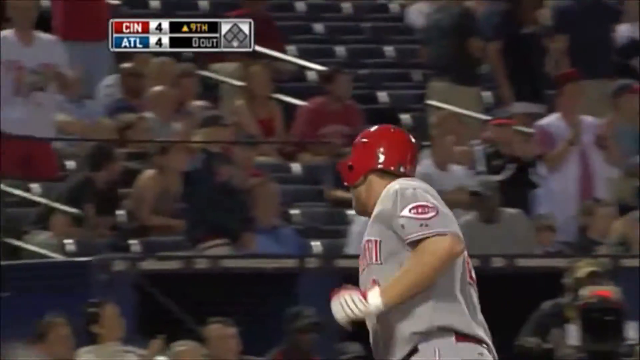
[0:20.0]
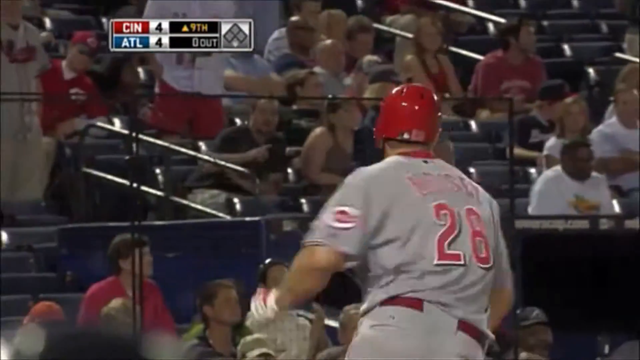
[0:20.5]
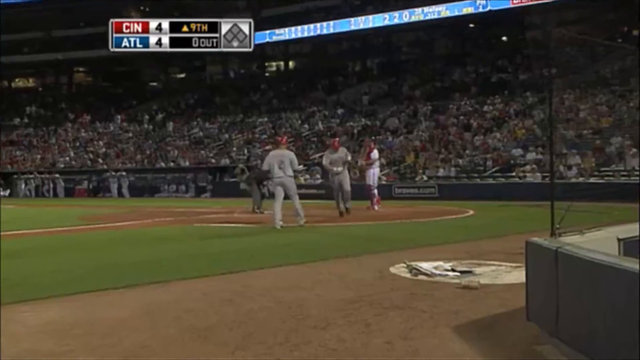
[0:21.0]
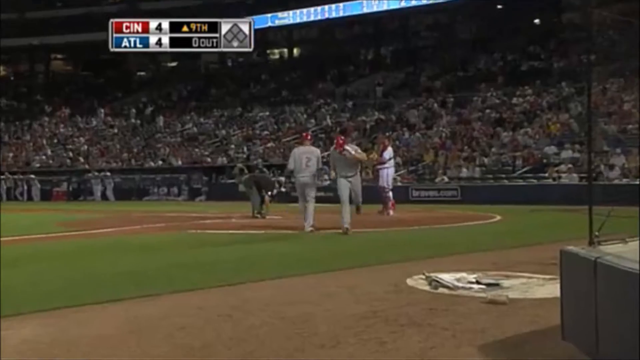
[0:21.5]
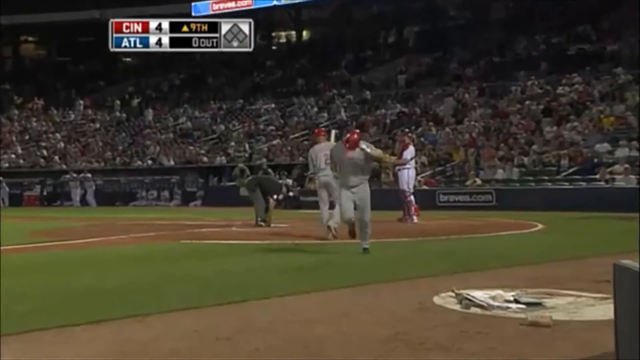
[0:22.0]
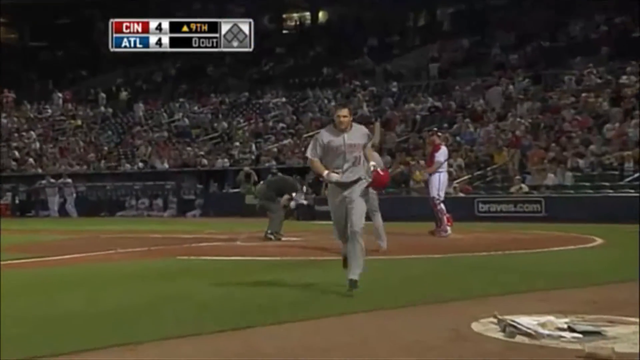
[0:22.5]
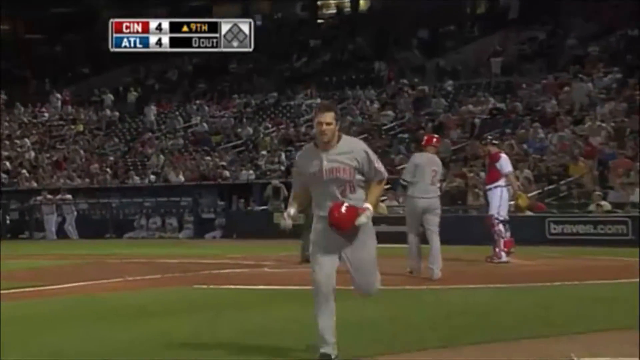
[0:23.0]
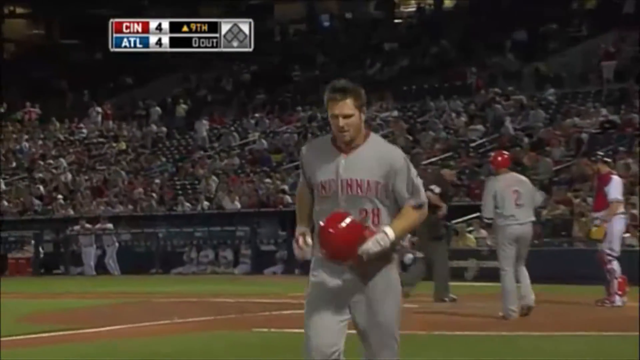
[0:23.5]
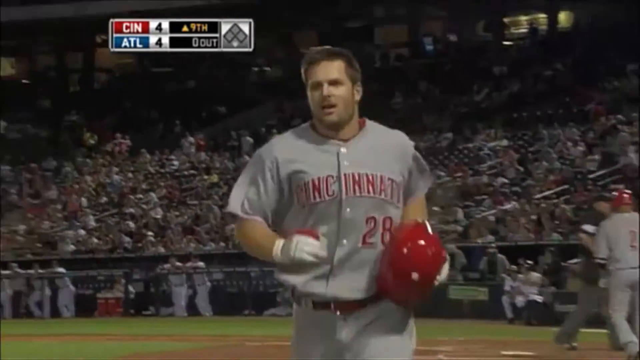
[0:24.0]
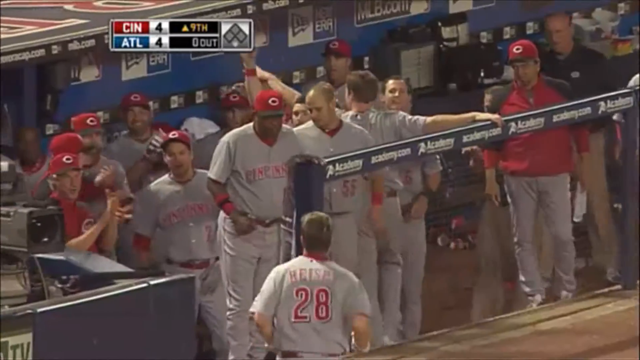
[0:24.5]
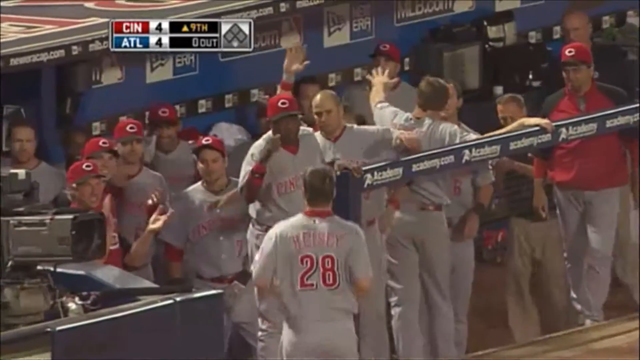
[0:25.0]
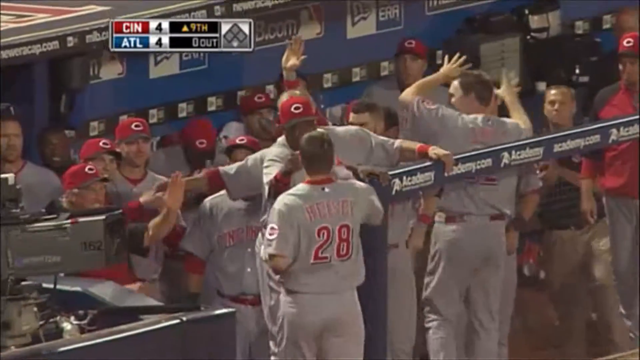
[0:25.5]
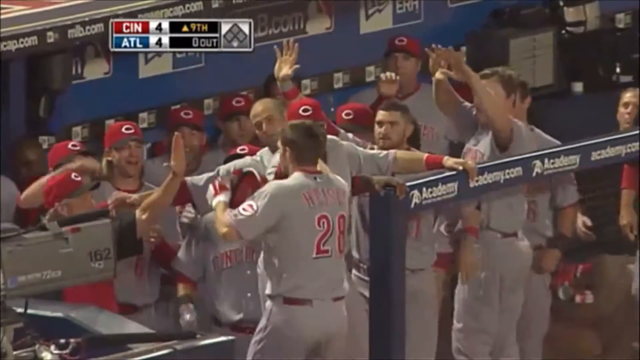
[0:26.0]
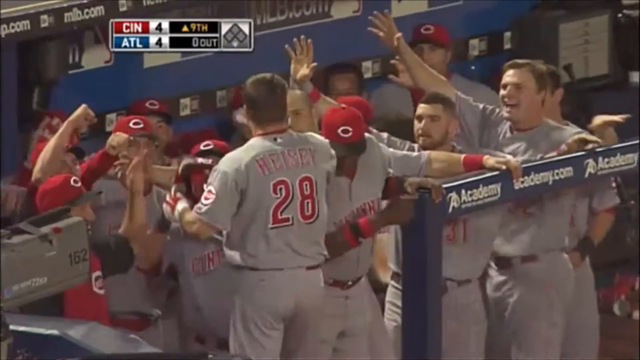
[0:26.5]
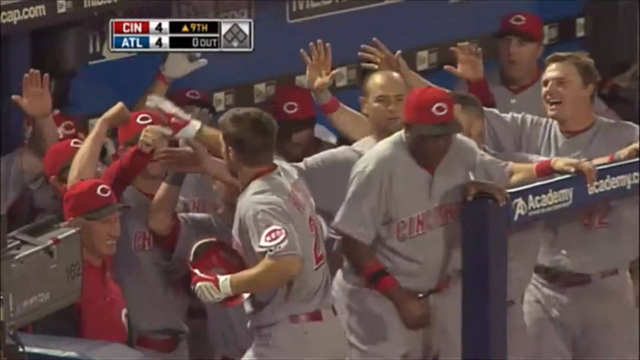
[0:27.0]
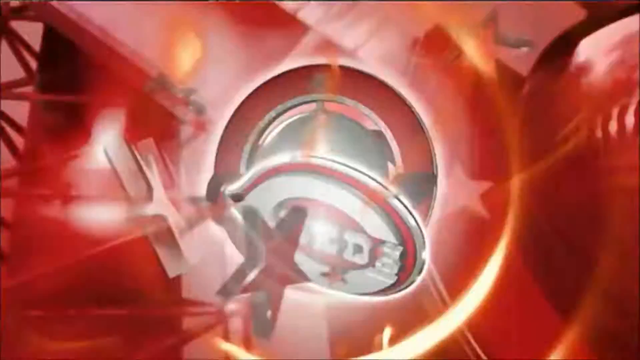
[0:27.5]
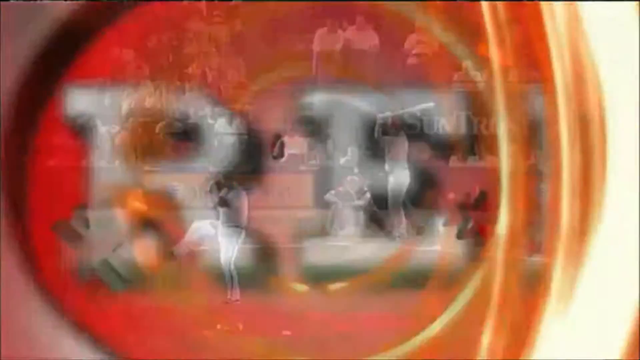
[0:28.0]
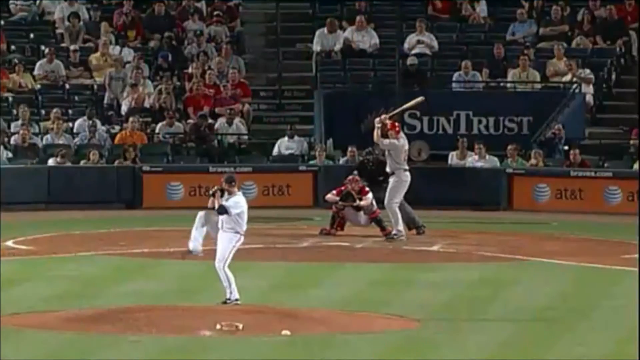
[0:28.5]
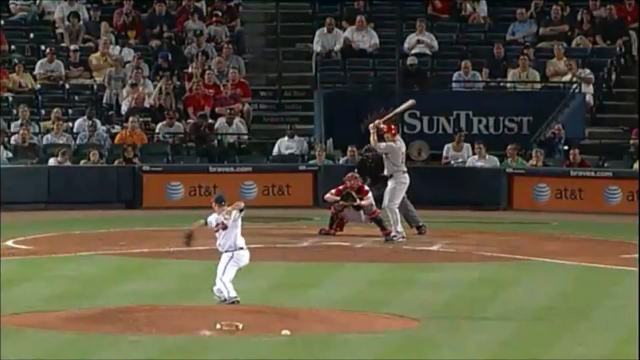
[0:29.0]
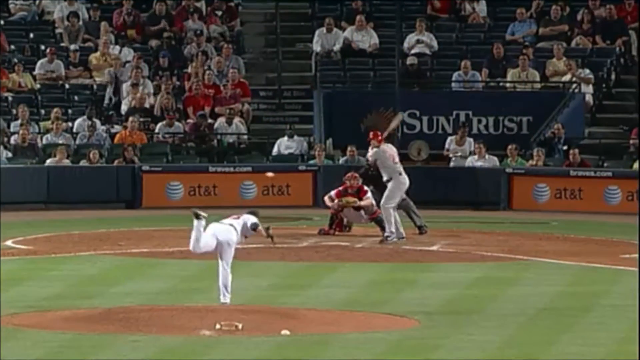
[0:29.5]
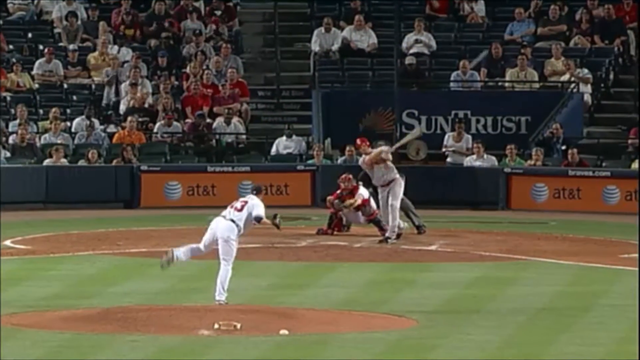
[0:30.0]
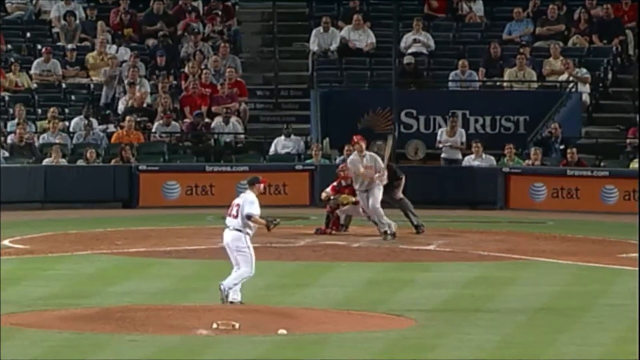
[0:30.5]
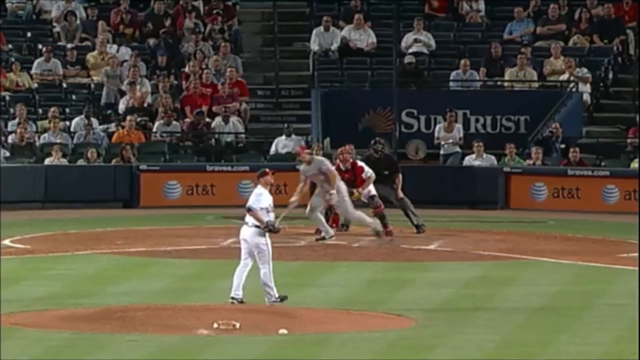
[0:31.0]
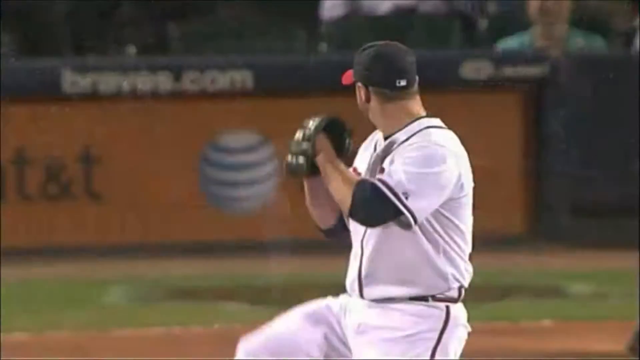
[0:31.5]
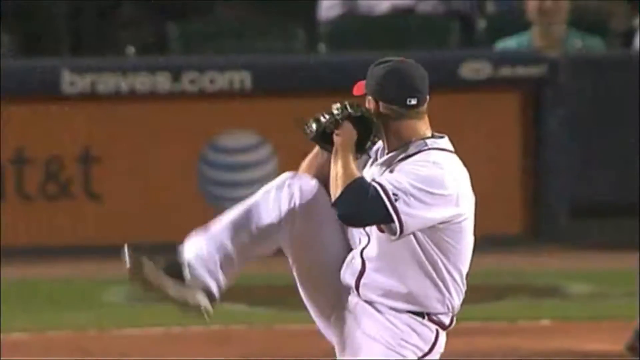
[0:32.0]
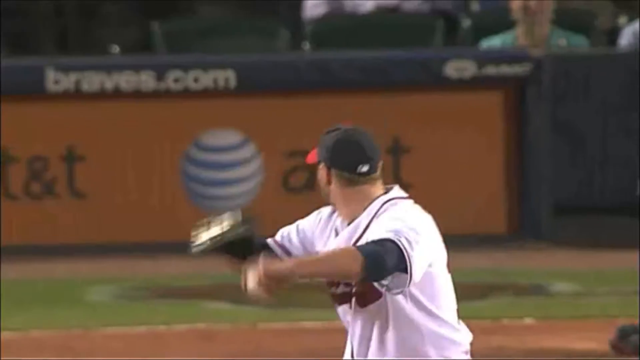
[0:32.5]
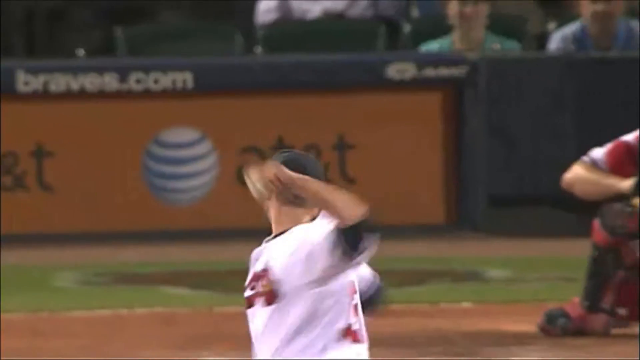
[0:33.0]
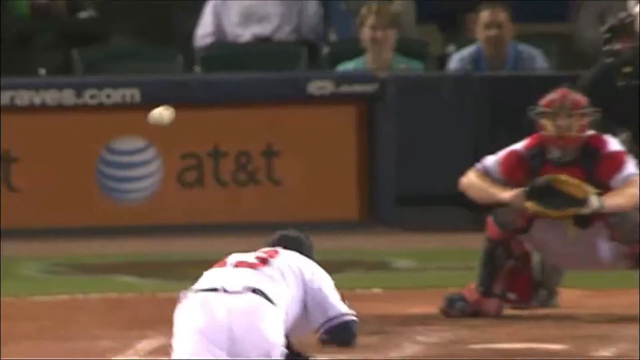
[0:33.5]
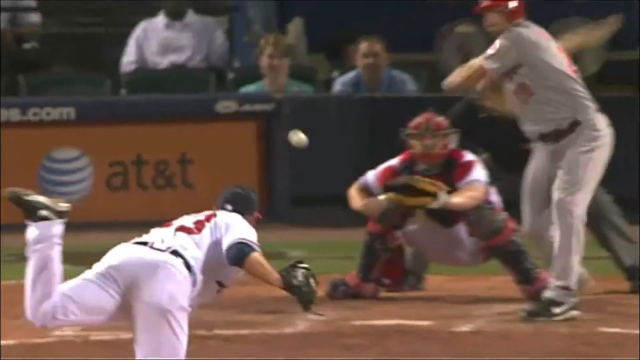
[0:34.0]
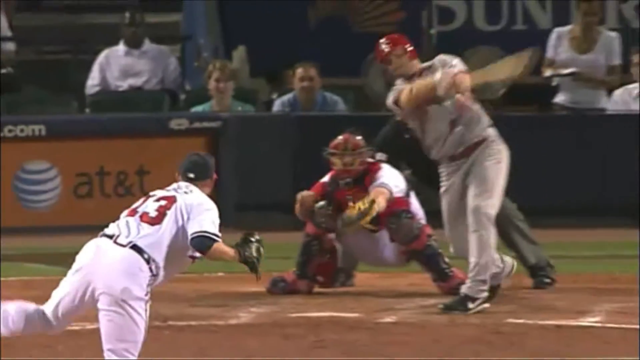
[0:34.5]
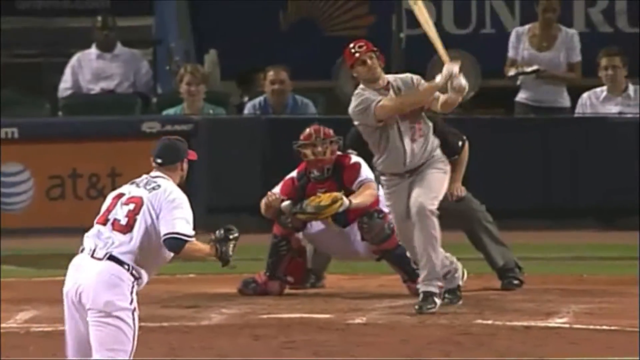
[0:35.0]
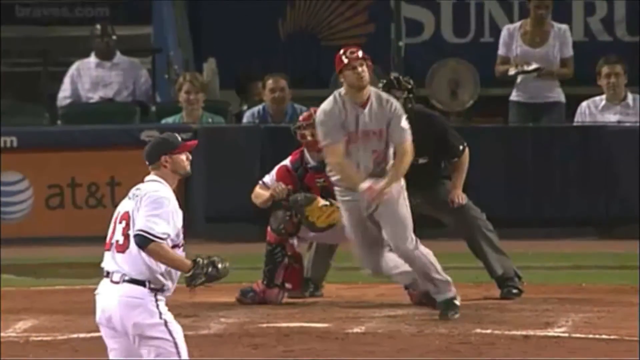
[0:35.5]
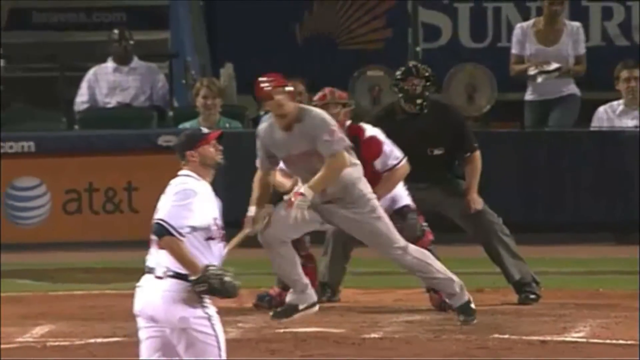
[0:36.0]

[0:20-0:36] The Cincinnati player finishes running home, takes off his cap with his left hand and jogs off the field. He fist bumps one of the players and starts high-fiving a bunch of the others. The Reds title symbol pops up and a replay of the home run follows, showing in slow motion the pitcher throwing the ball and the Cincinnati player hitting it, then the player running toward first base and making the home run. The high-five is replayed, and the same footage is replayed again in slow motion, showing the area behind the batter that reads "SunTrust" and the AT&T advertisement on the sides with an orange background. The same footage keeps replaying over and over. It shows him fist bumping a black player, who slaps his butt, and then the Reds symbol pops up with the C for Cincinnati.